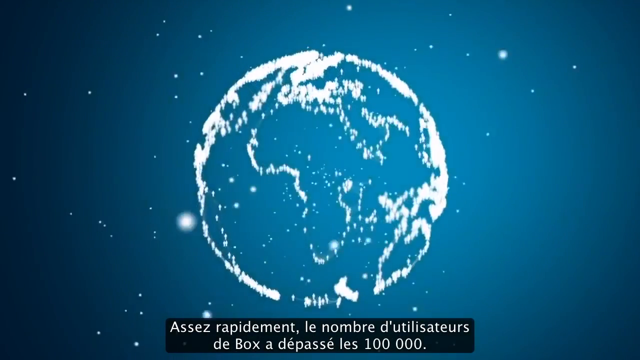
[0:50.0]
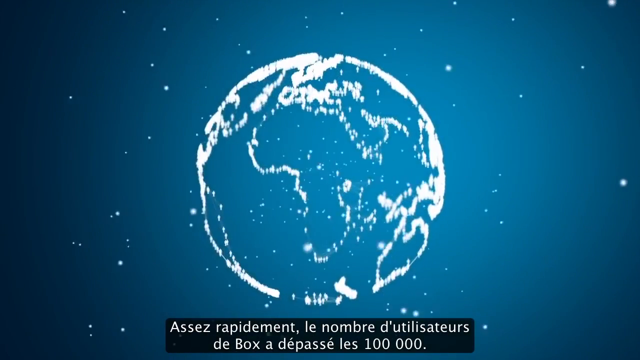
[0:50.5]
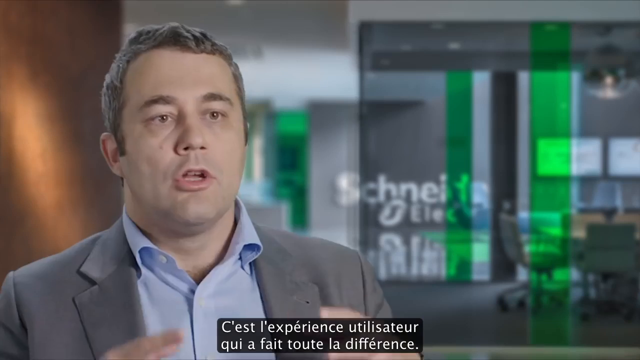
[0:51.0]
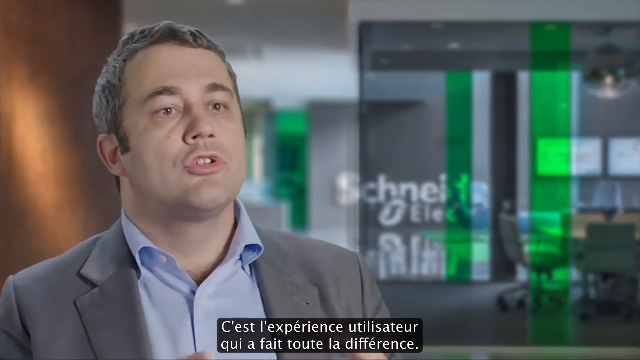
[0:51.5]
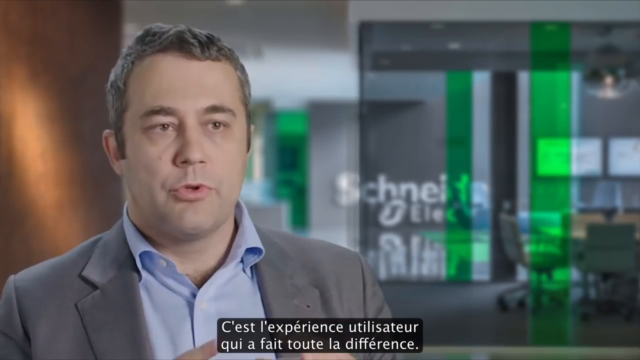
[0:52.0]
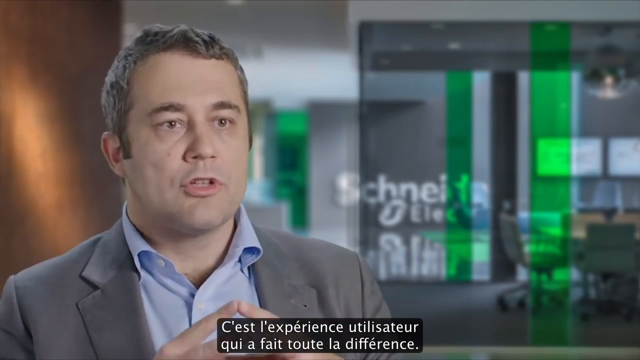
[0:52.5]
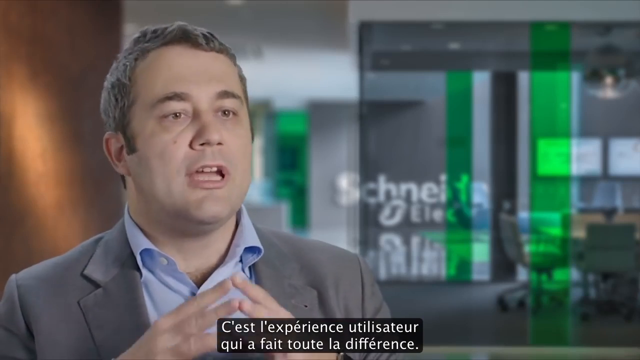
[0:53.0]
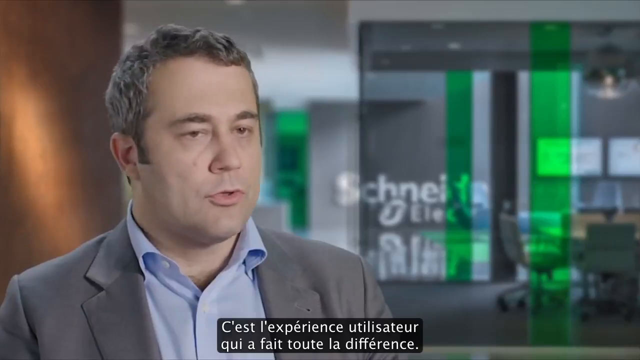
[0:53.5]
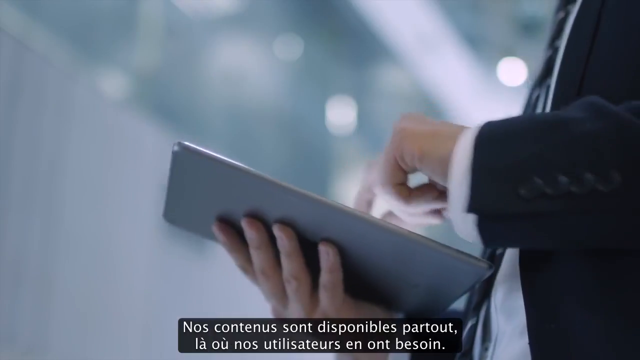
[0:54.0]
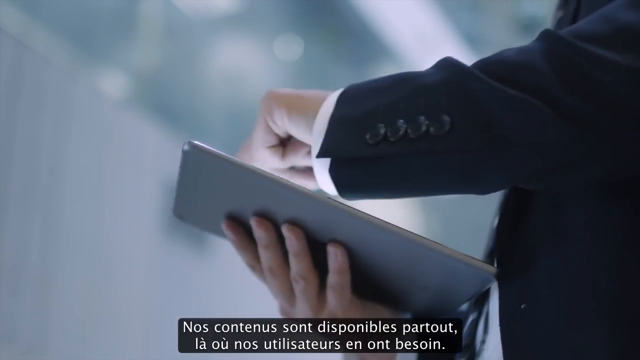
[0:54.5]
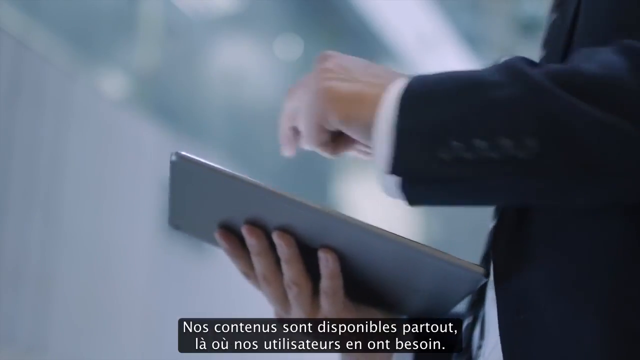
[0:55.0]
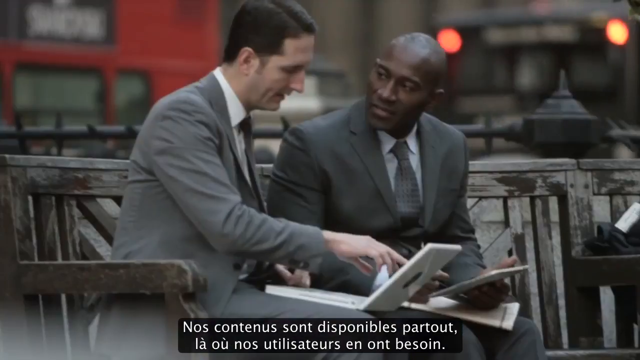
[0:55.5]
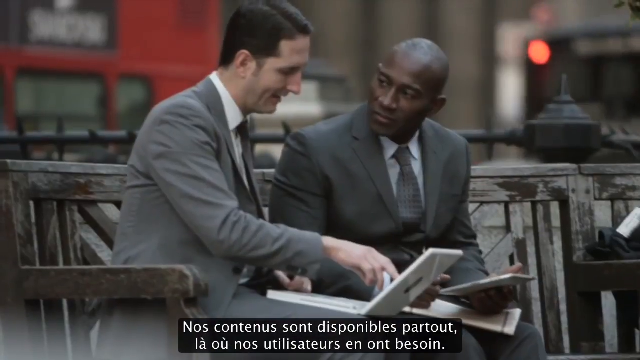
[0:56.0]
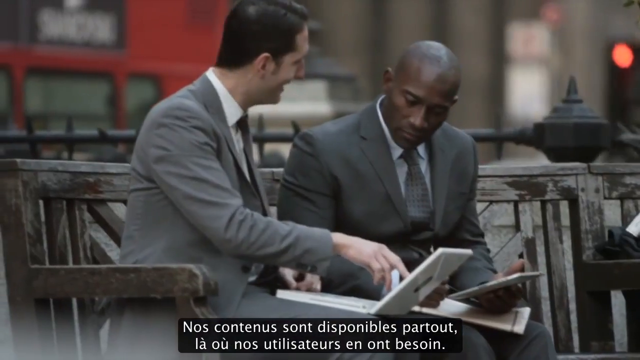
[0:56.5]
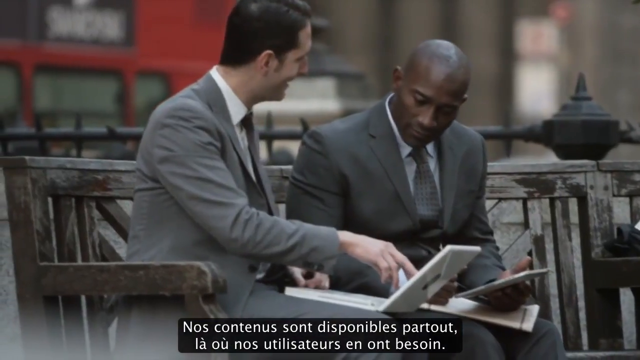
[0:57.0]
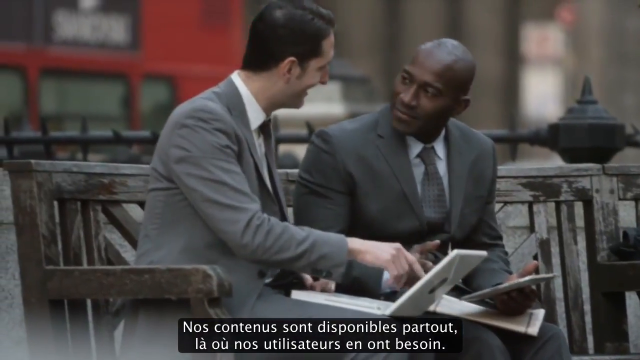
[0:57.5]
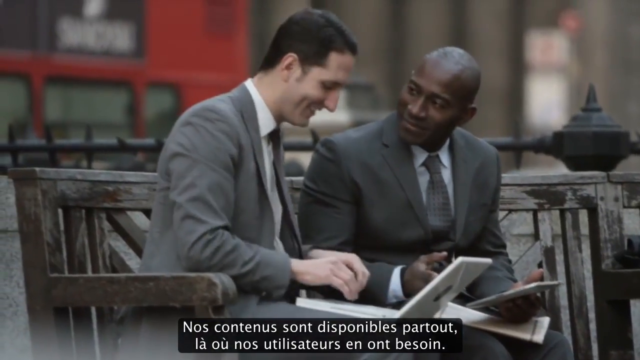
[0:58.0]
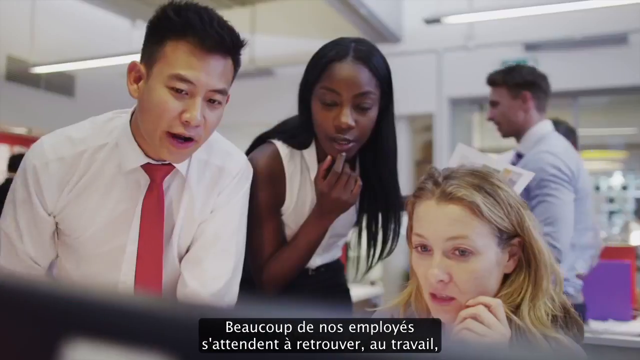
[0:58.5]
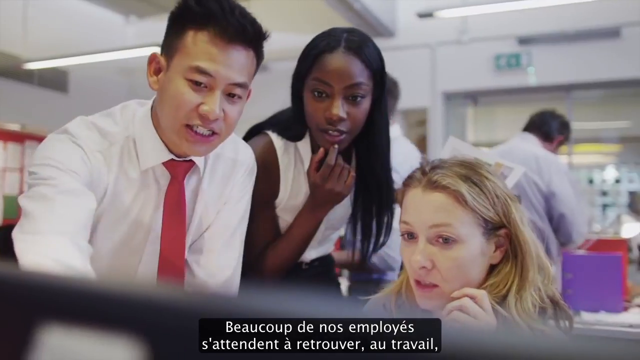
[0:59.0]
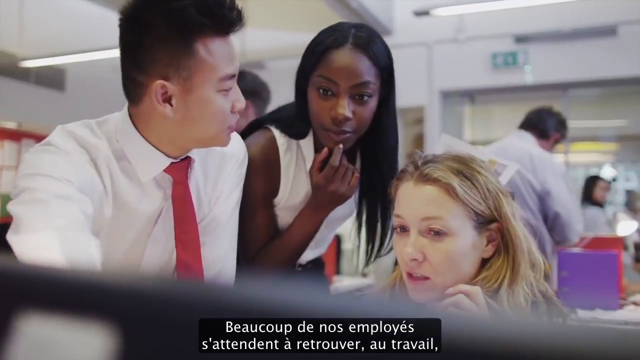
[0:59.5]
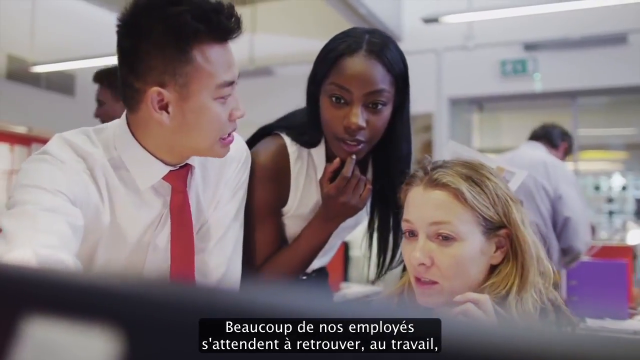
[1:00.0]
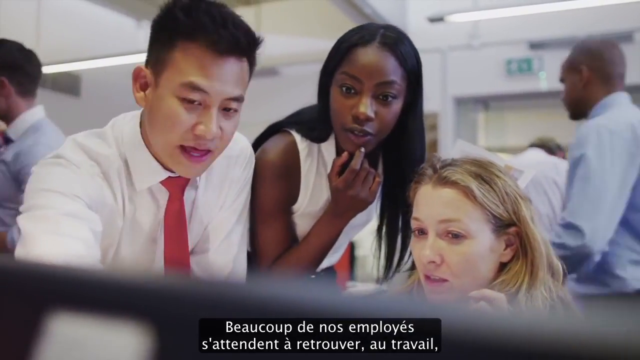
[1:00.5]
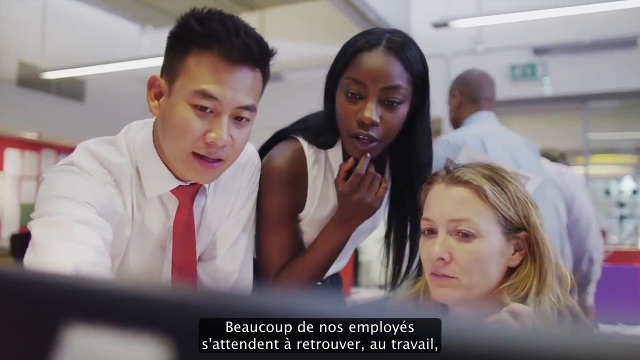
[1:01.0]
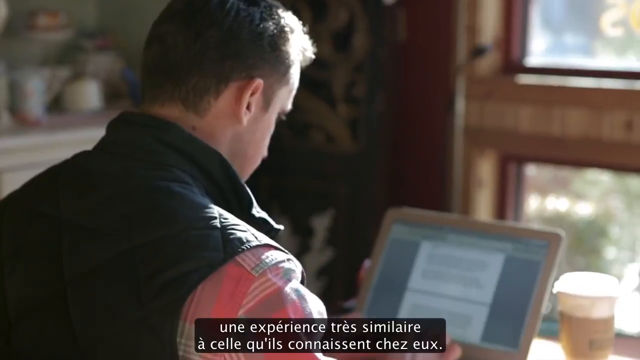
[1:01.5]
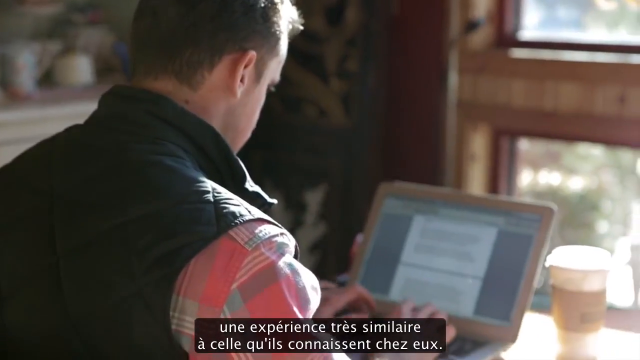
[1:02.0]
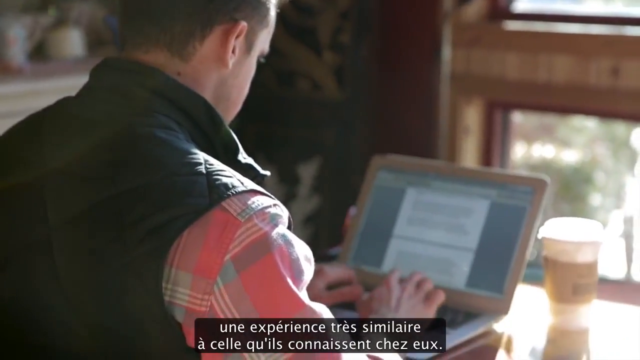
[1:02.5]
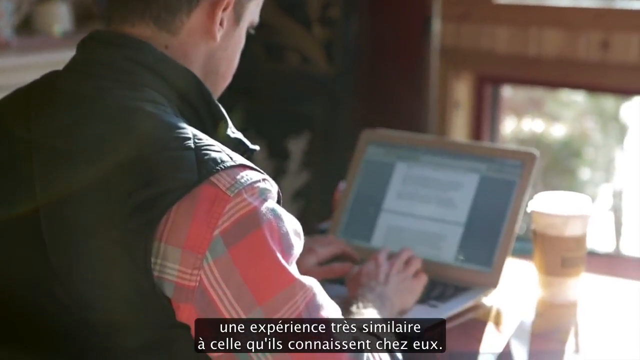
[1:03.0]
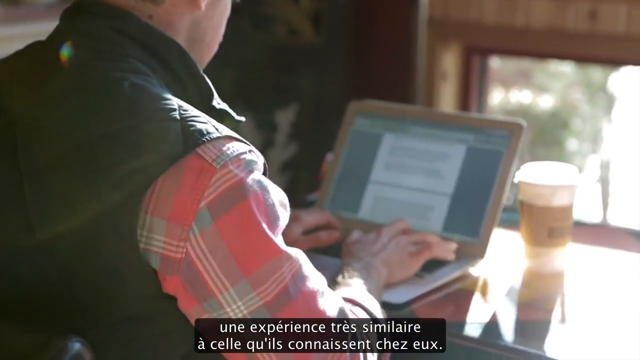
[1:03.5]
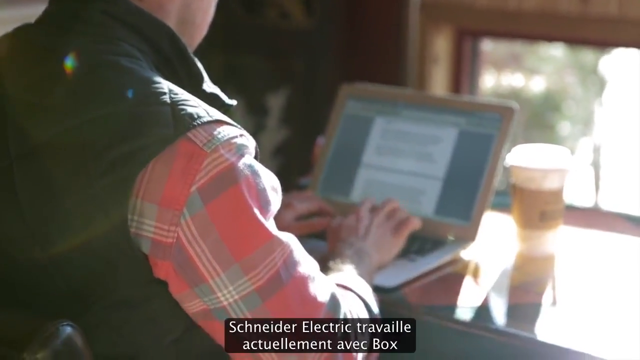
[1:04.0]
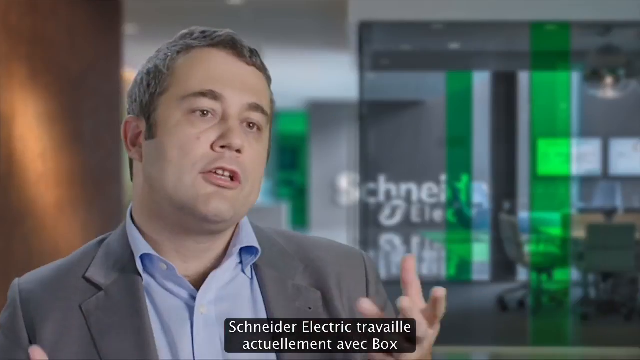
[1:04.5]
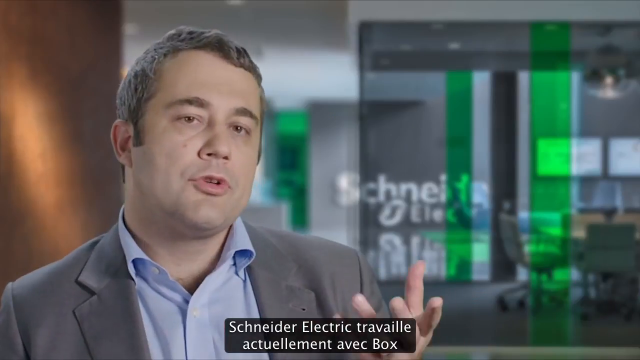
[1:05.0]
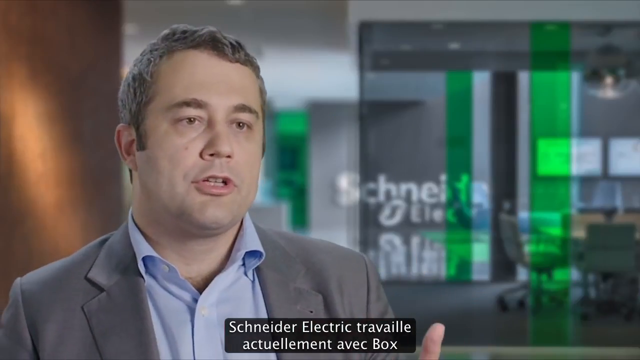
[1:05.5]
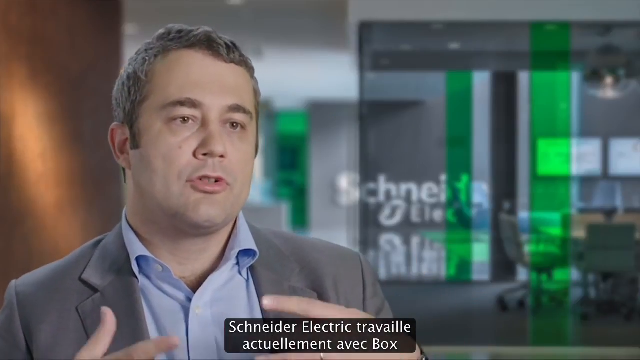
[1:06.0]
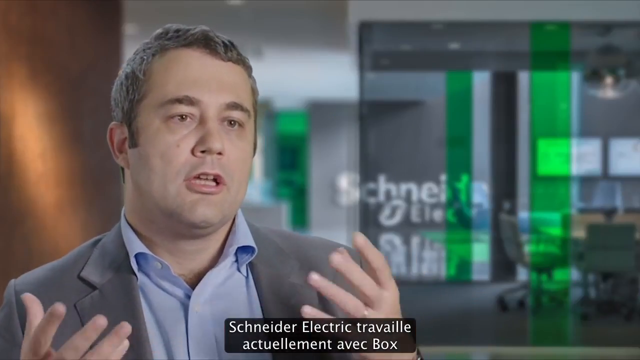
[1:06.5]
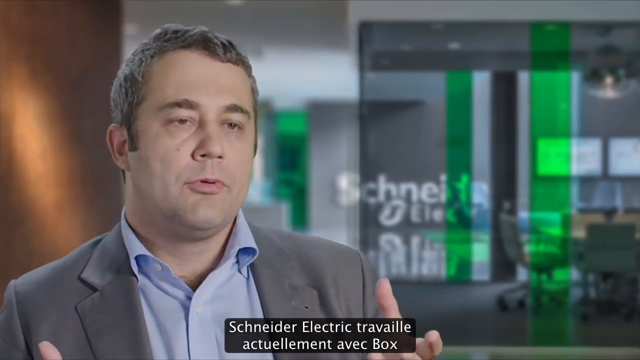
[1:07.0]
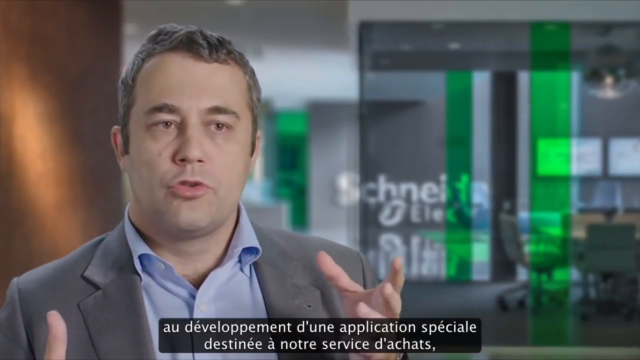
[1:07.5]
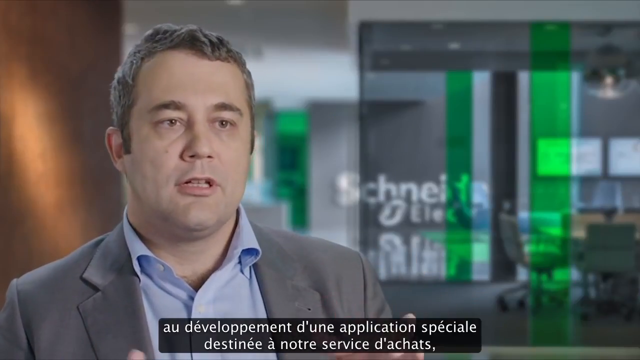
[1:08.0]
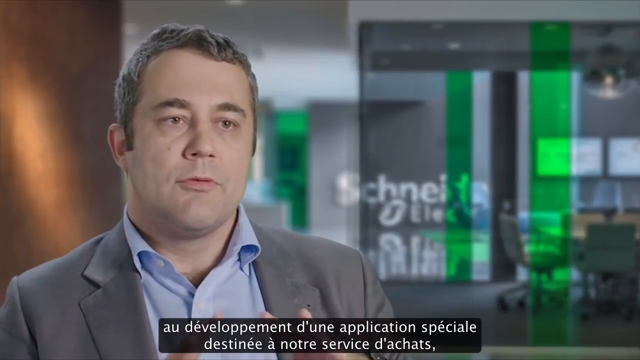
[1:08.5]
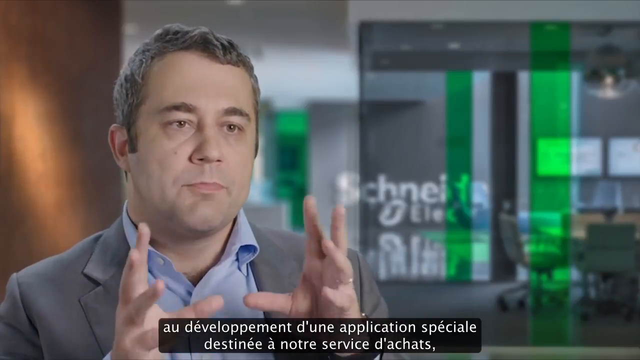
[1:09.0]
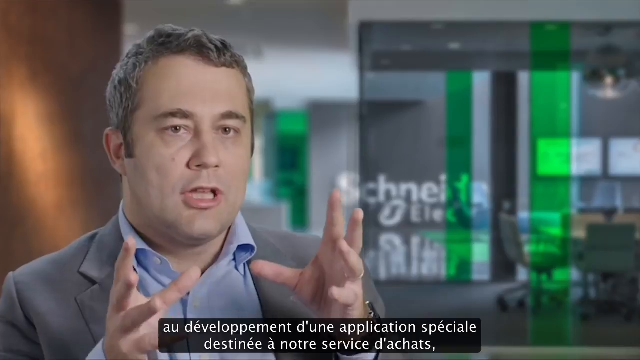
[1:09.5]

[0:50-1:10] A global sign is shown while the man keeps talking. People are still busy working on their laptops, looking as if they are overworking themselves. Two women and a man appear, with the man showing the two women something on a laptop. Another man is busy working on his laptop, probably at home rather than in an office. The talking man then appears again, explaining something as if he is very concerned.